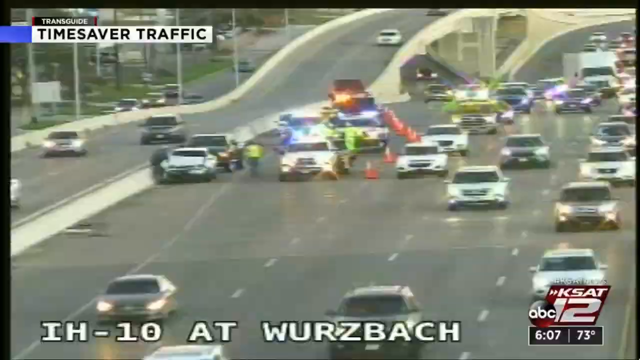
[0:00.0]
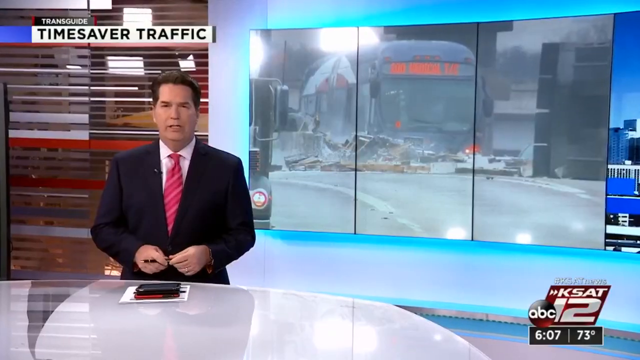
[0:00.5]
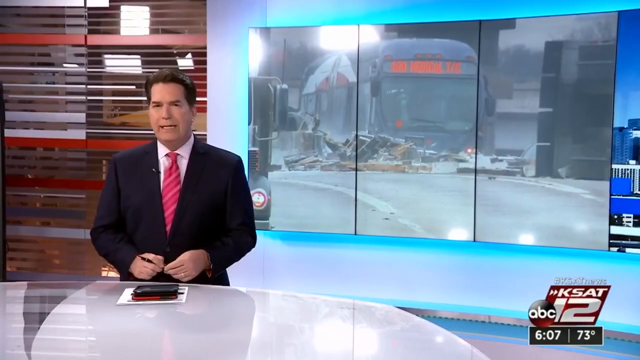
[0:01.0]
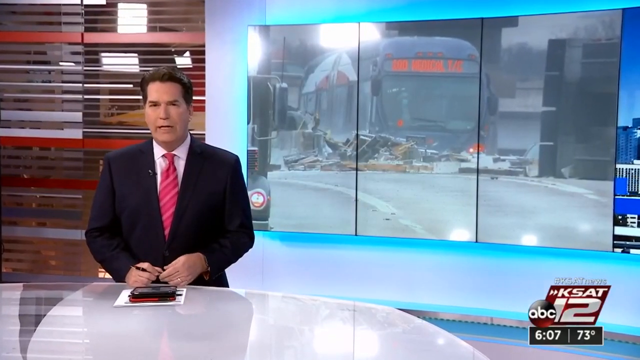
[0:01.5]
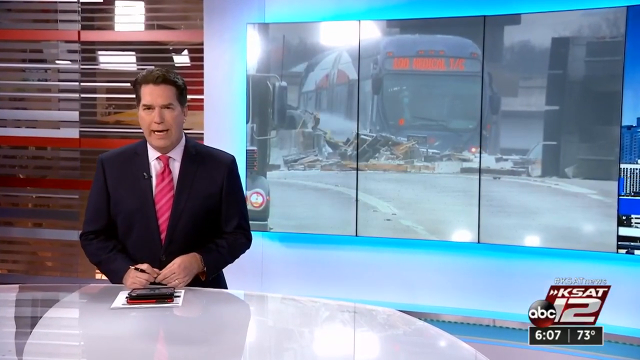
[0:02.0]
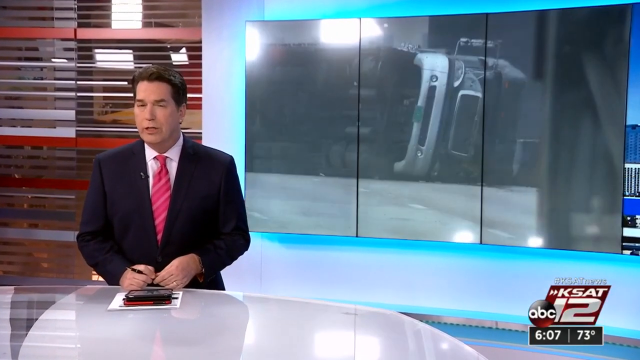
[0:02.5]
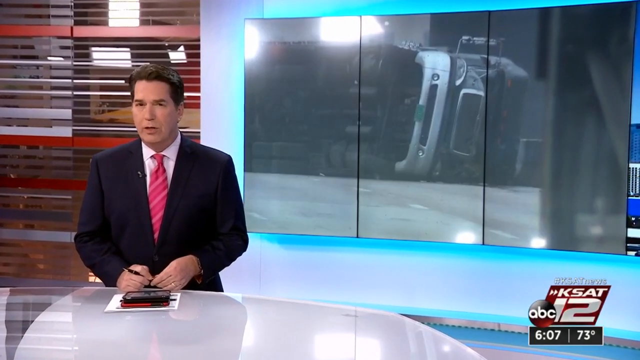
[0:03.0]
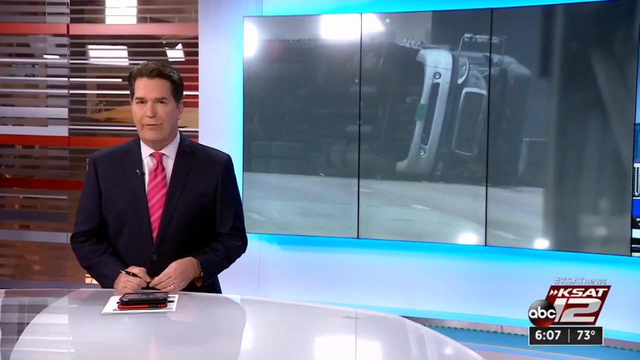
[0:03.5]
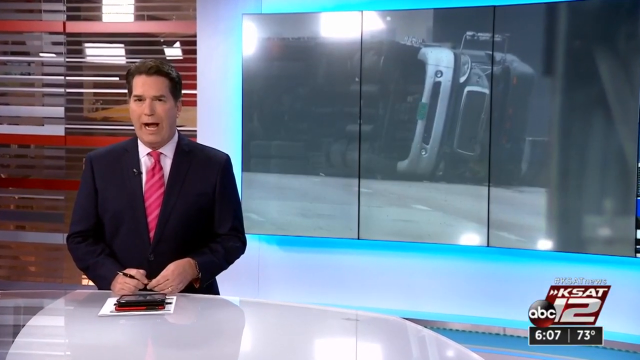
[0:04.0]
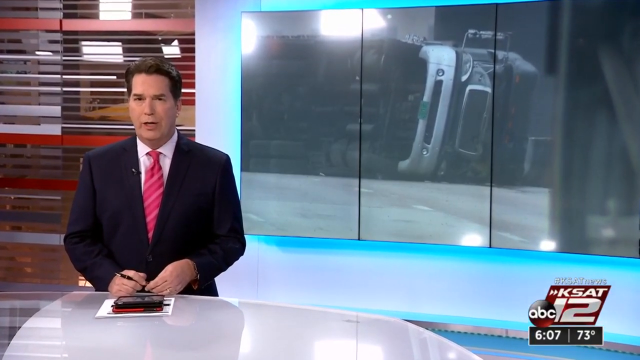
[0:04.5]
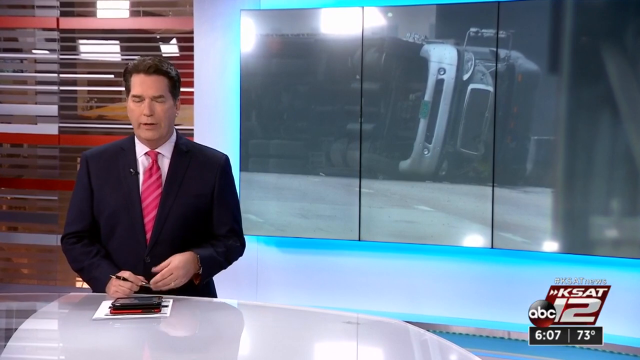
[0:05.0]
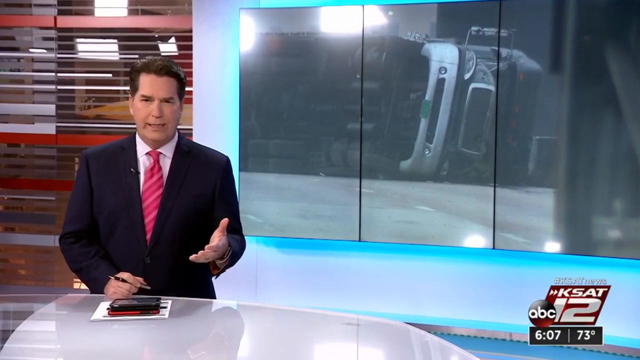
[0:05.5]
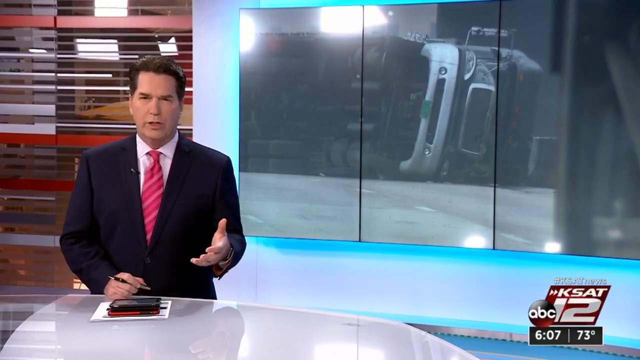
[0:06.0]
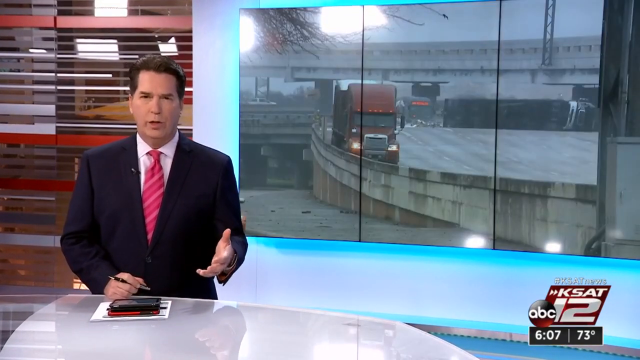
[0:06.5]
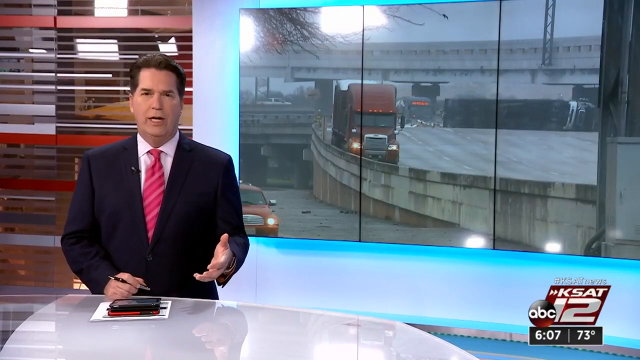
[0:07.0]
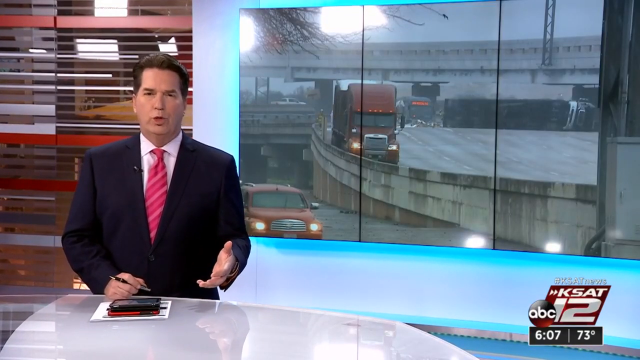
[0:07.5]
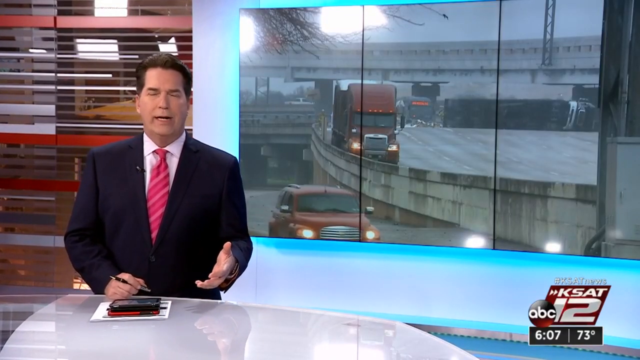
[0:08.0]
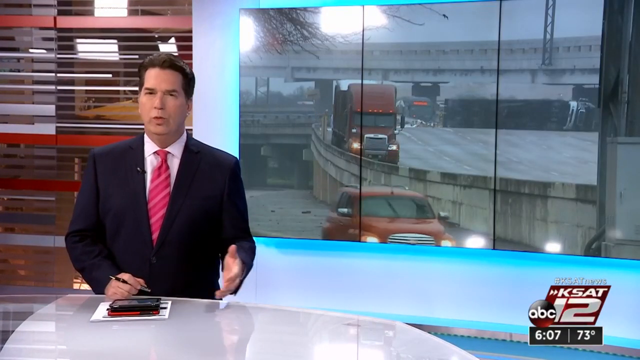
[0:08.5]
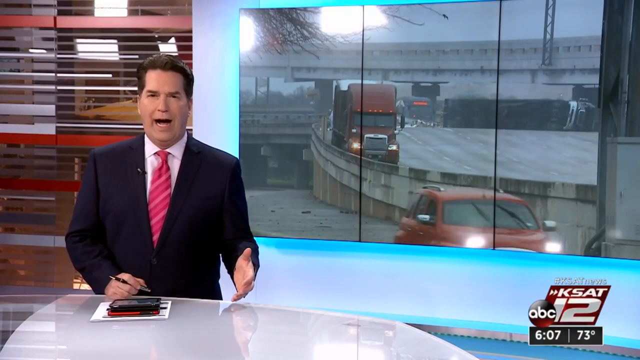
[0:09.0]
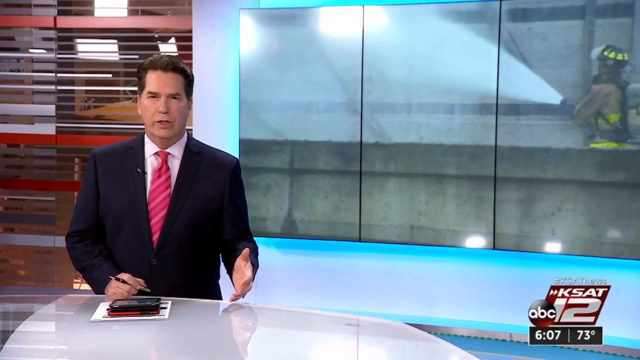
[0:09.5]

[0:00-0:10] A man stands on the left holding a pen, with a table in front of him that has a spoon on it. He is in a suit with a red tie. Above him on the left, text reads "Time Saver Traffic." Behind him on the right, a big screen shows a bus with some broken parts of a divider in front of it. On the bottom right, text reads "KSAT ABC 12." The screen on the right then shows a car upside down while the newsman talks, gesturing with his hand. The screen at the back changes scenes to a highway with trucks and cars moving, including a red truck, and then switches to a fireman holding a water hose.